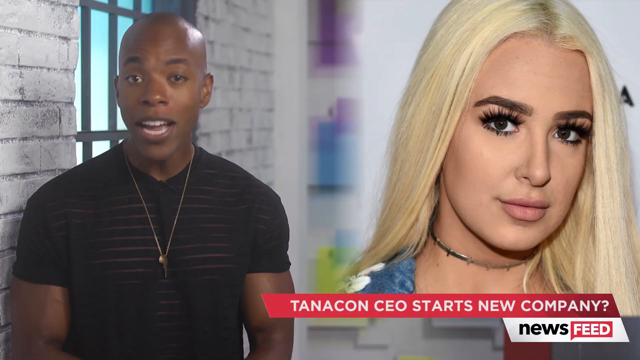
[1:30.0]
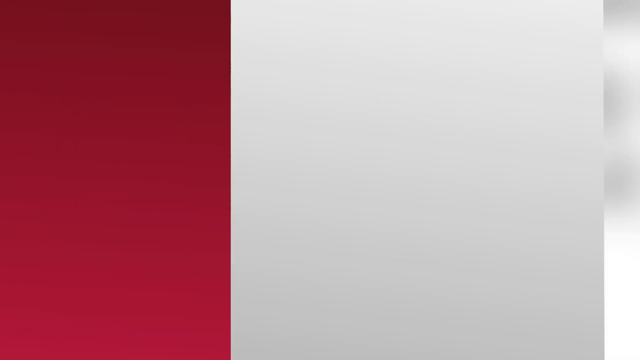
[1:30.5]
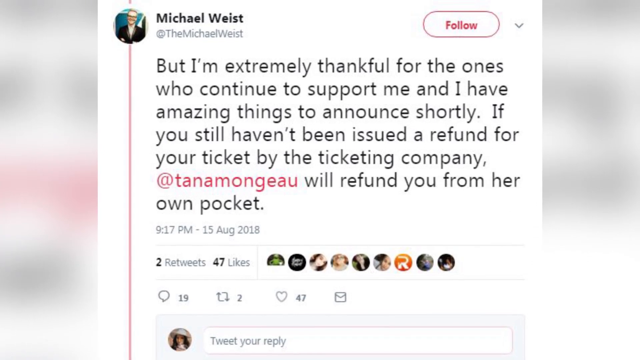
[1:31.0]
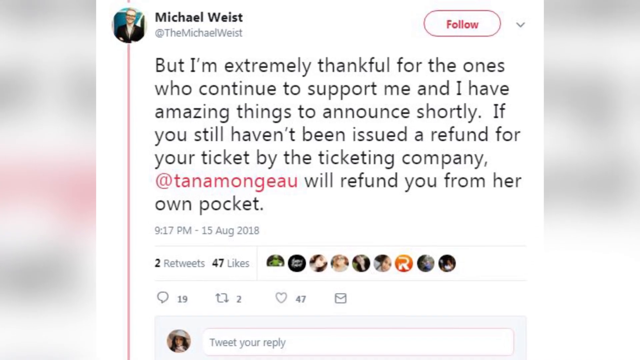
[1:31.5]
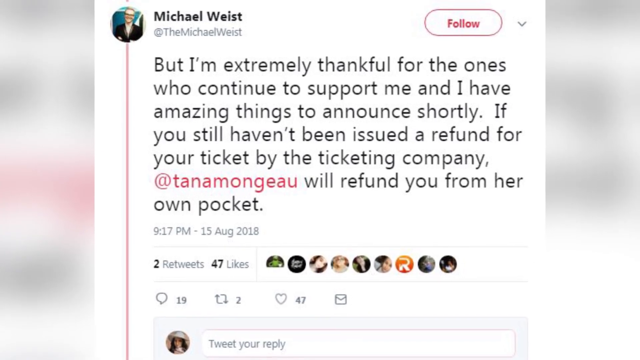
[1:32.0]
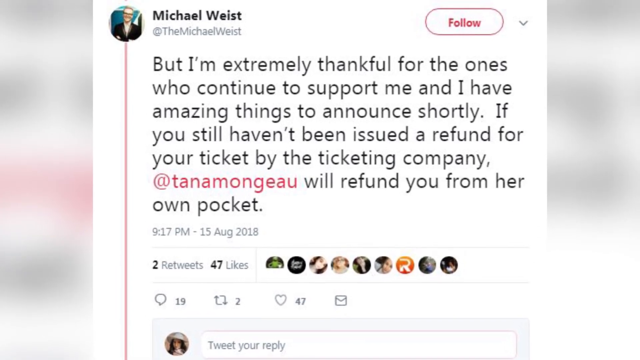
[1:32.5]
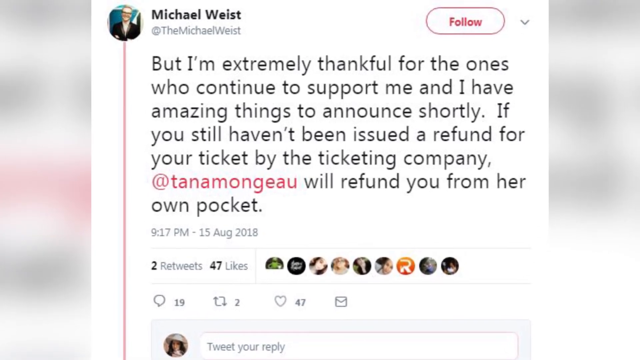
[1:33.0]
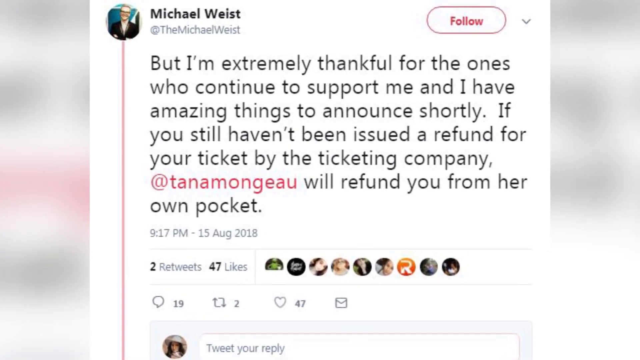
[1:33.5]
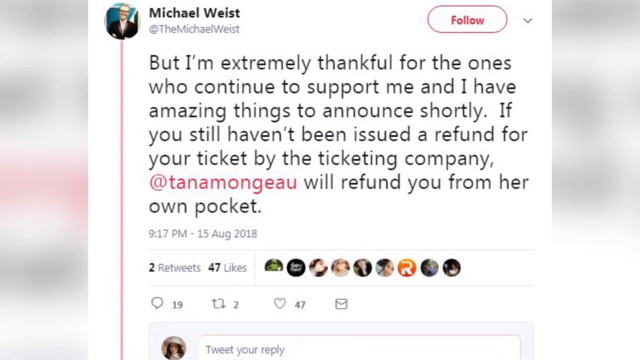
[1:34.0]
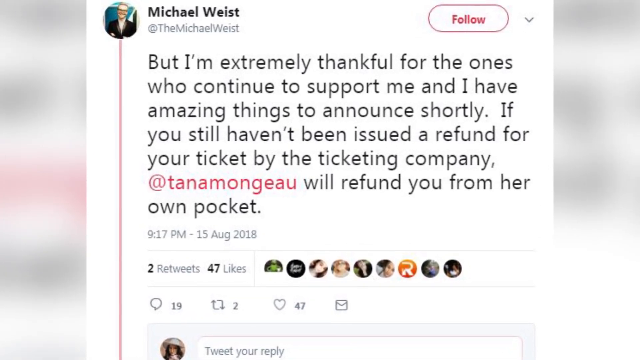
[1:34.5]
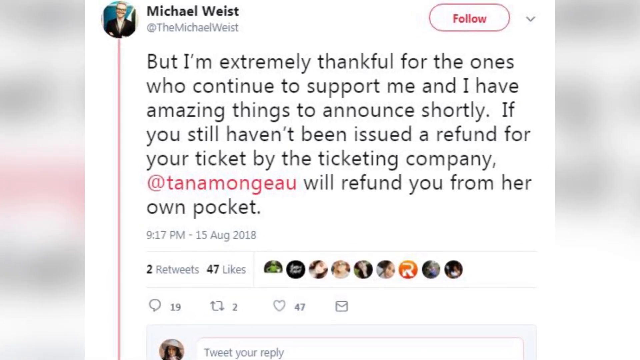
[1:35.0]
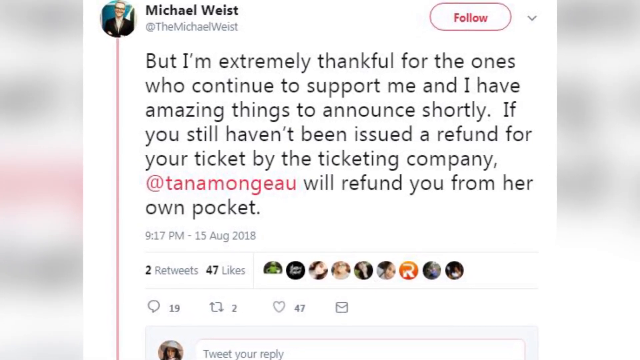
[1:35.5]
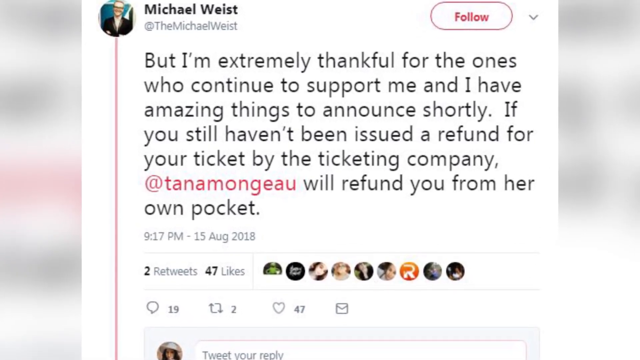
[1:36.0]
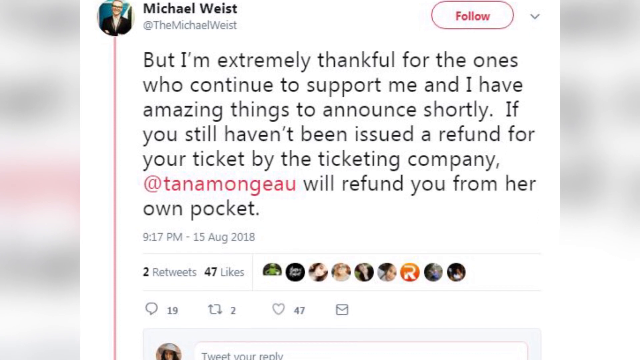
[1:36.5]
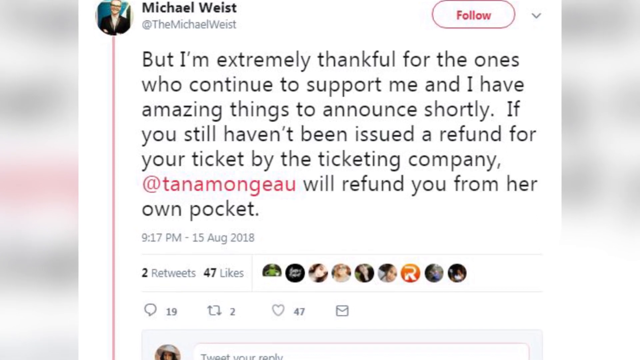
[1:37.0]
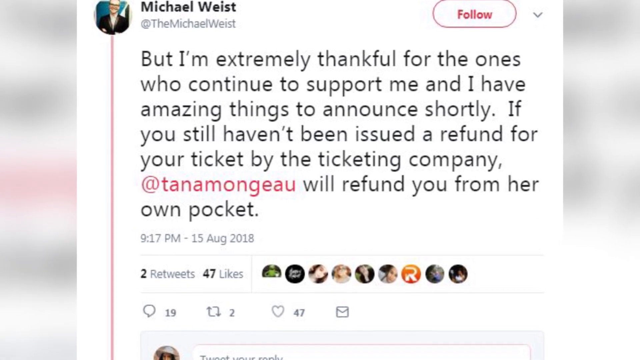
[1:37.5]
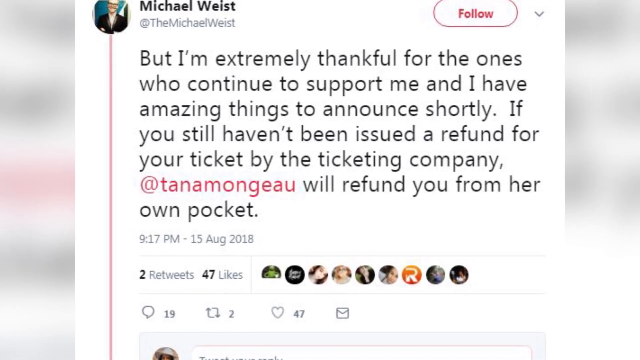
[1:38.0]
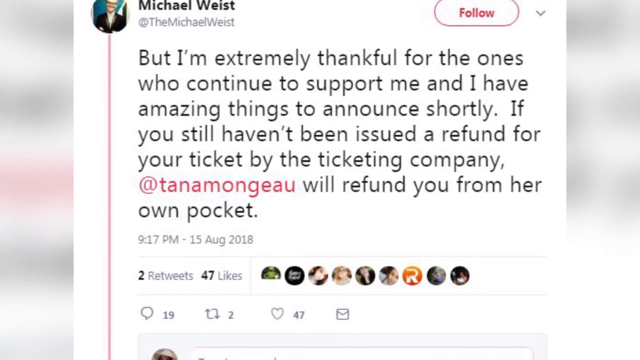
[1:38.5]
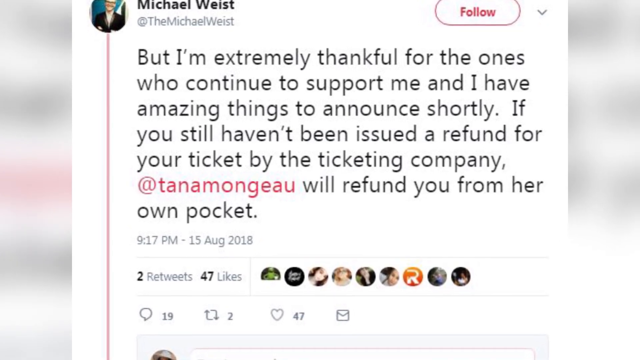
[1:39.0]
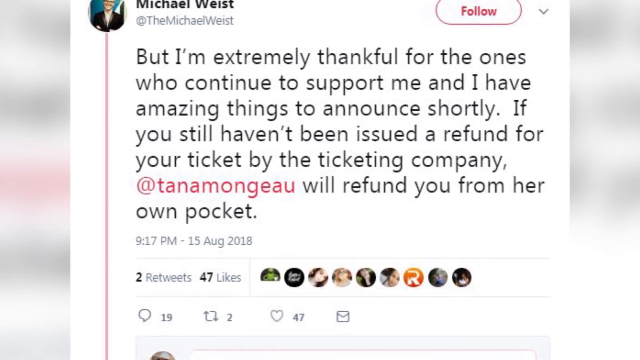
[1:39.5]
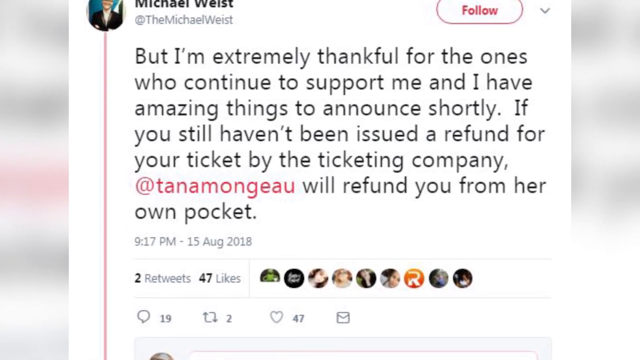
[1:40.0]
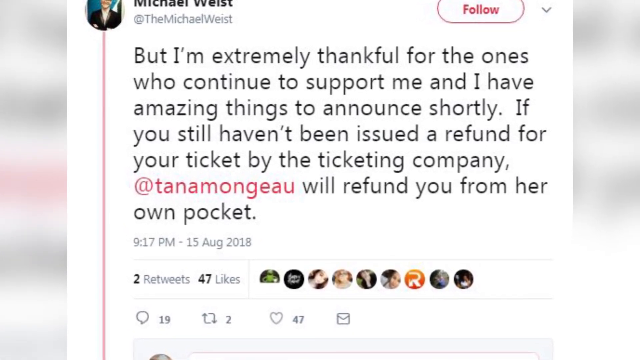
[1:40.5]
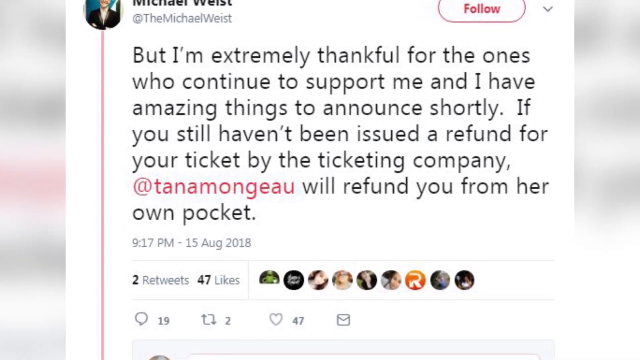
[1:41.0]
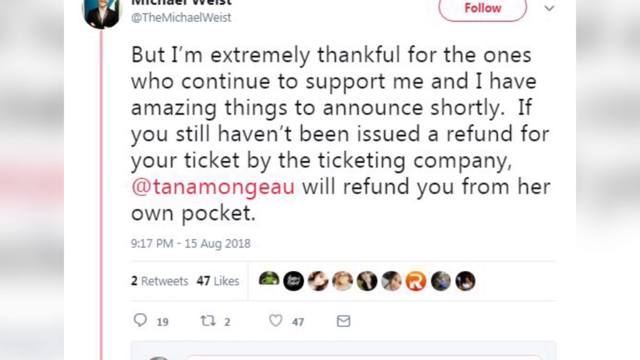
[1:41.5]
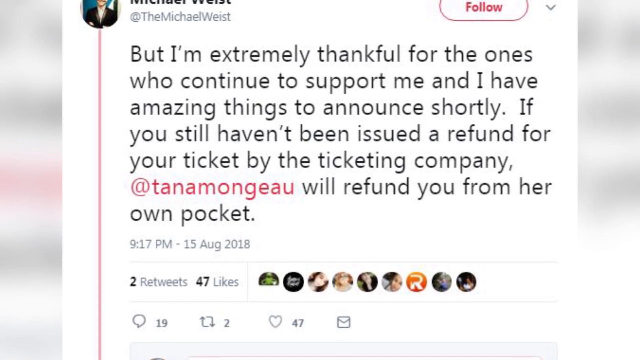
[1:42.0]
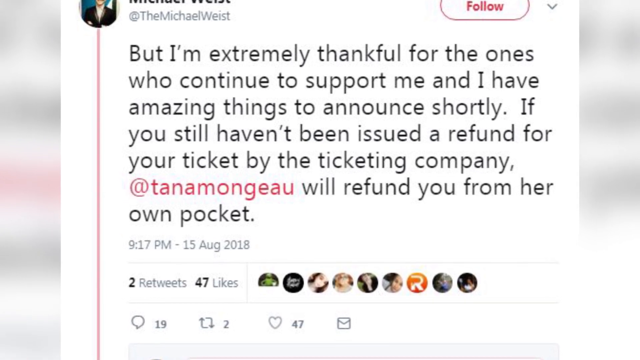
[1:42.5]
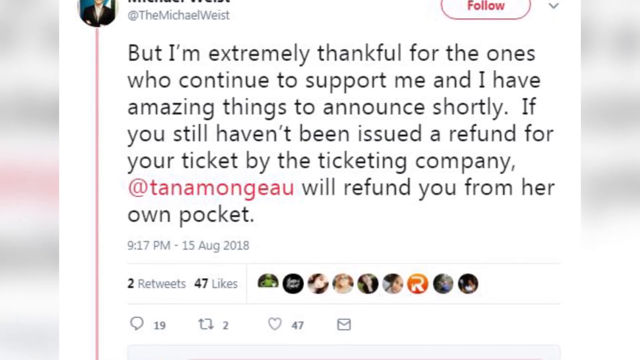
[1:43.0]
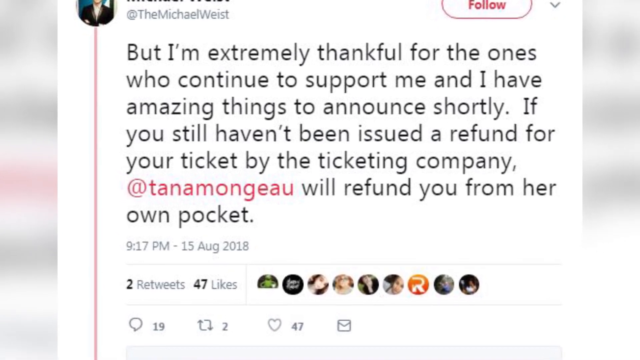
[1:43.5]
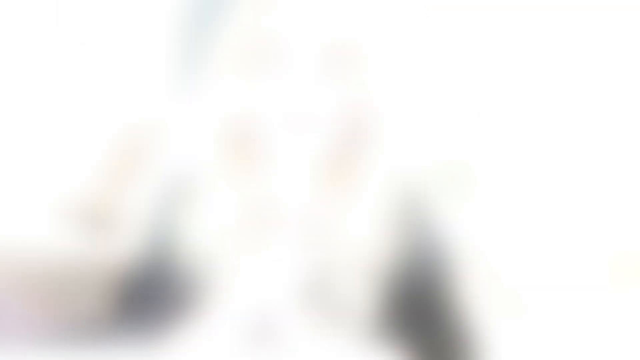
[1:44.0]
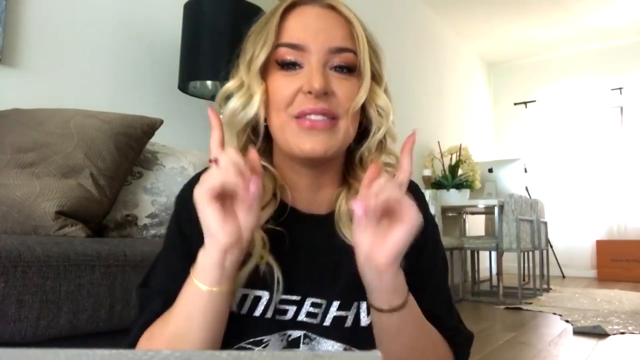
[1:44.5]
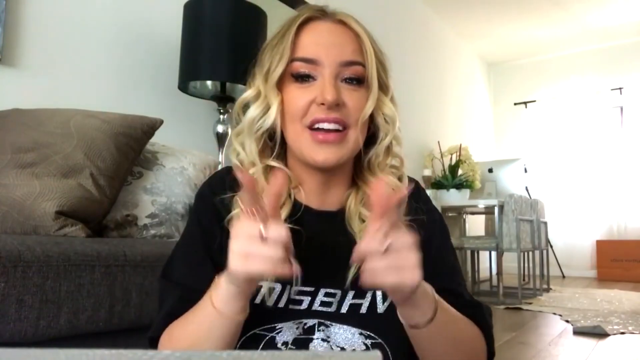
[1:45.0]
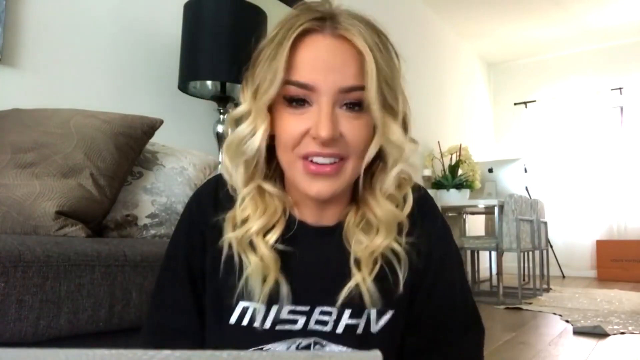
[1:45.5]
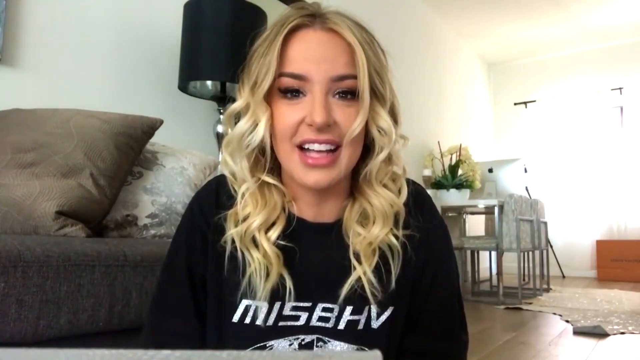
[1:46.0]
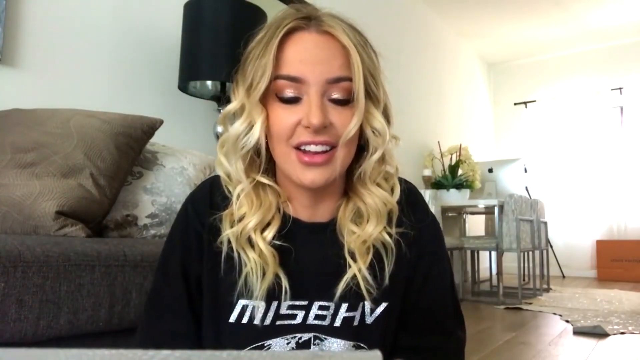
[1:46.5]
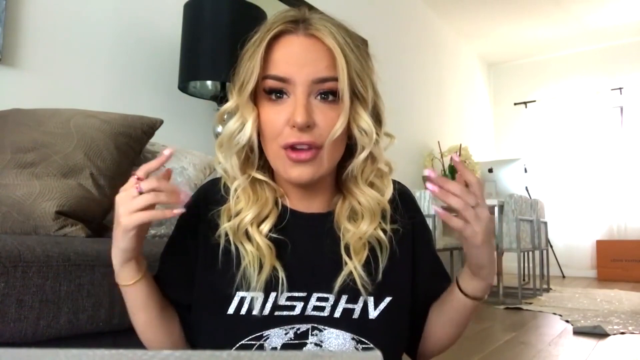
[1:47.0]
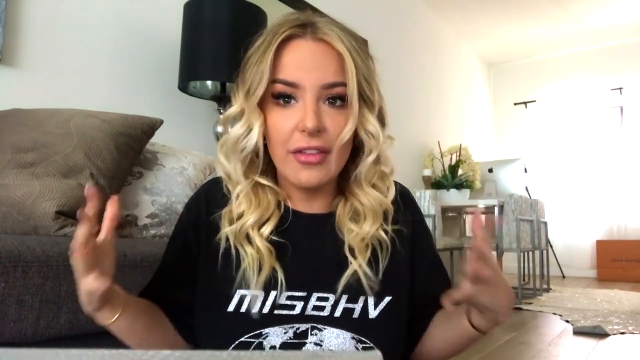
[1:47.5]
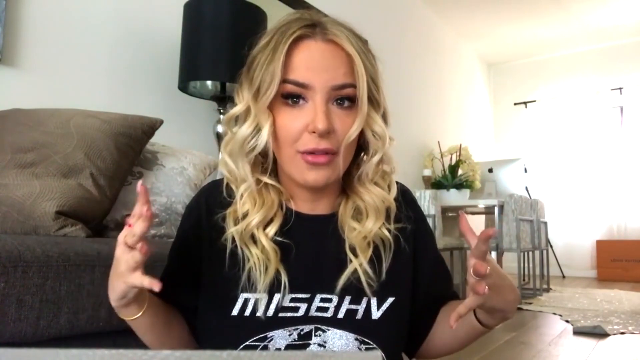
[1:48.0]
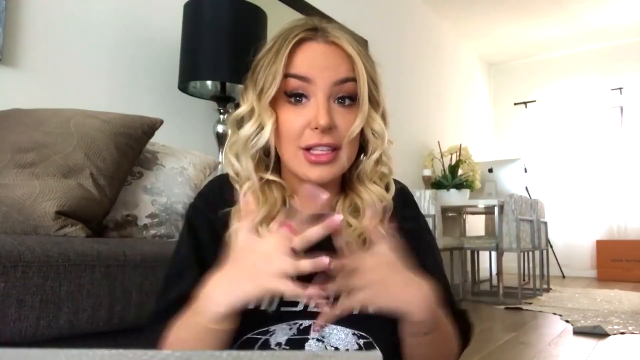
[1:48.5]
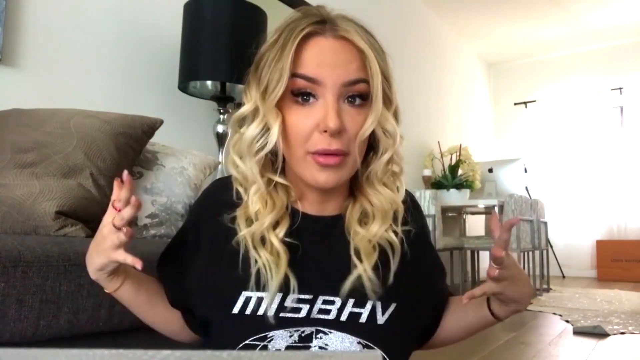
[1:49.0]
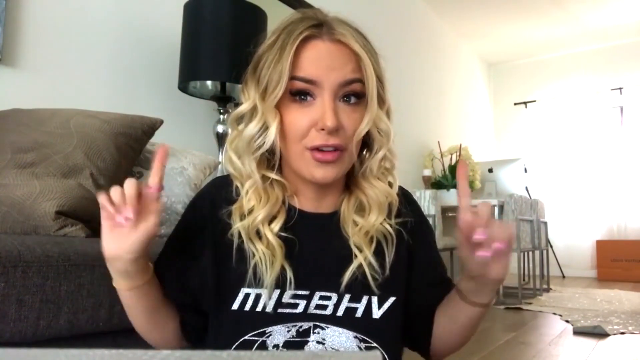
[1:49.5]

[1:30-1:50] A social media post appears, apparently a tweet by Michael Weist, the man with the blonde mohawk, with his profile picture in a circle to the left. The tweet reads: "but I'm extremely thankful for the ones who continue to support me and I have amazing things to announce shortly. If you still haven't been issued a refund for your ticket by the ticketing company at Tanamango will refund you from her own pocket," with "at Tanamango" in red. Underneath are the typical retweet and like counts, and the camera pans in close. Then a different commentator, a blonde woman with kind of curly blonde hair, talks to the camera; she looks like the woman being discussed, possibly giving her side of the story, or she may just resemble her. She wears a short-sleeve black shirt with "MISBHV" in white capitals on the chest and looks like she is sitting on the ground in a living room. In the background are a brown couch, a brown pillow, a black-shaded floor lamp, and more light coming through what may be a window on the right side. She is Caucasian and young, maybe about 30, apparently wearing fake lashes and lipstick, and she gestures with her hands as she talks to the camera.